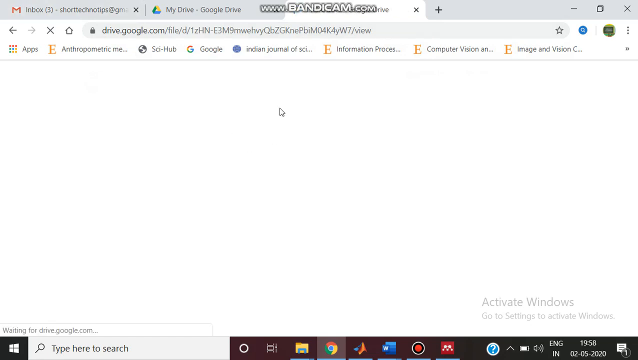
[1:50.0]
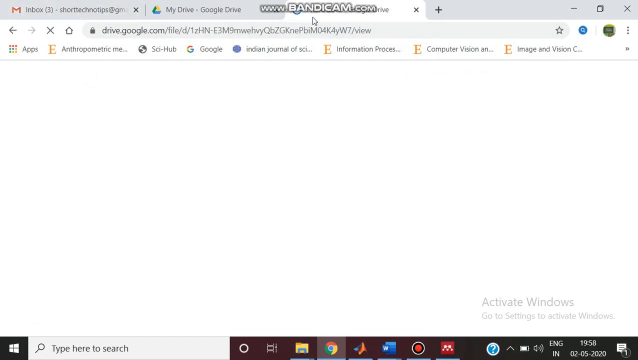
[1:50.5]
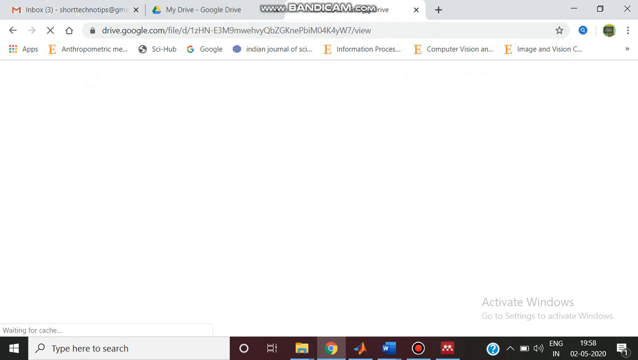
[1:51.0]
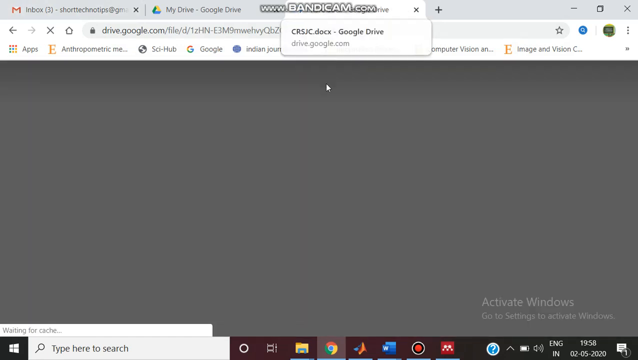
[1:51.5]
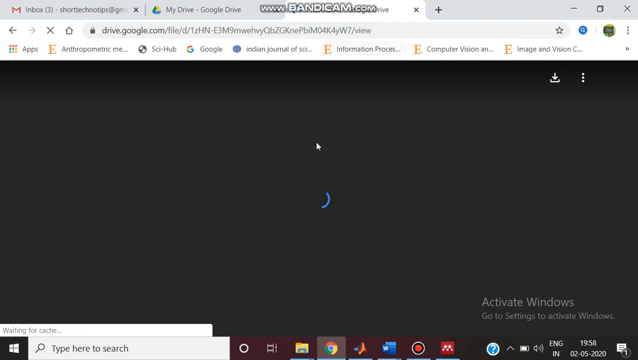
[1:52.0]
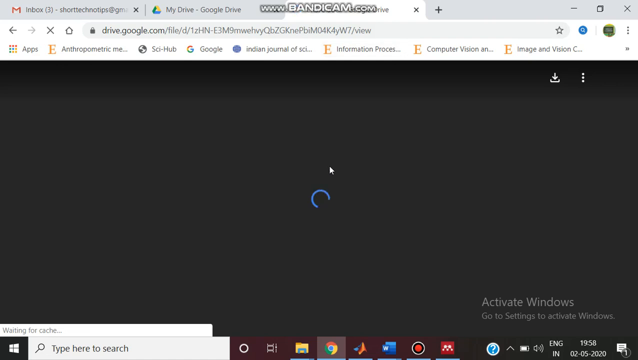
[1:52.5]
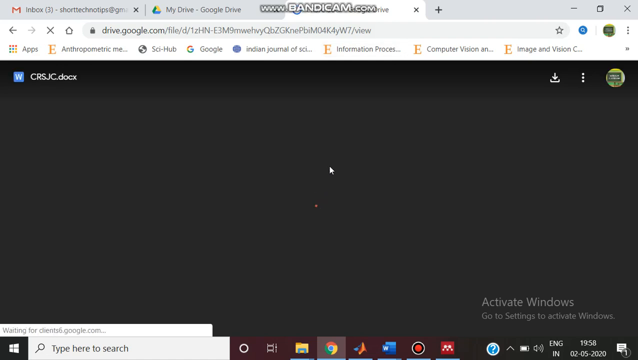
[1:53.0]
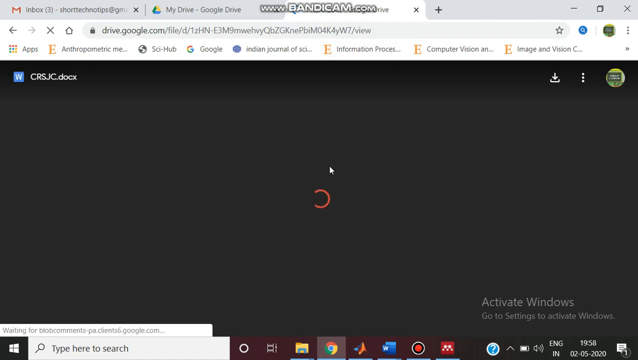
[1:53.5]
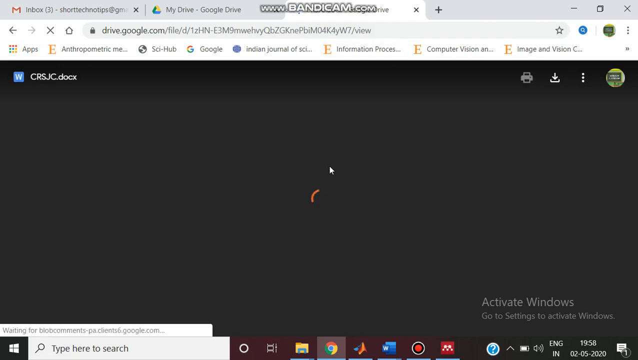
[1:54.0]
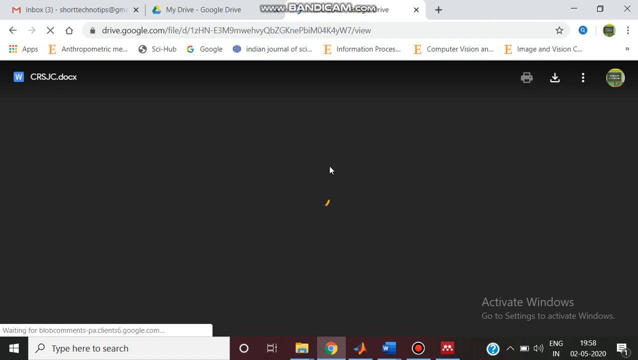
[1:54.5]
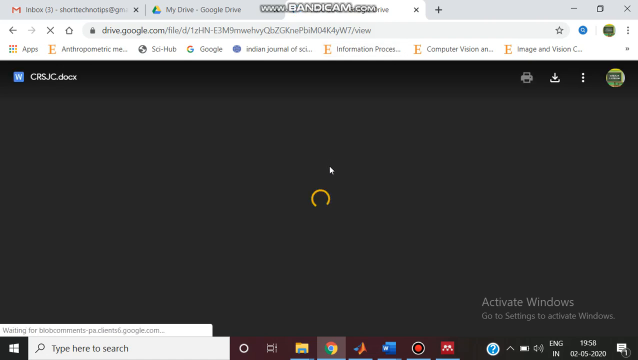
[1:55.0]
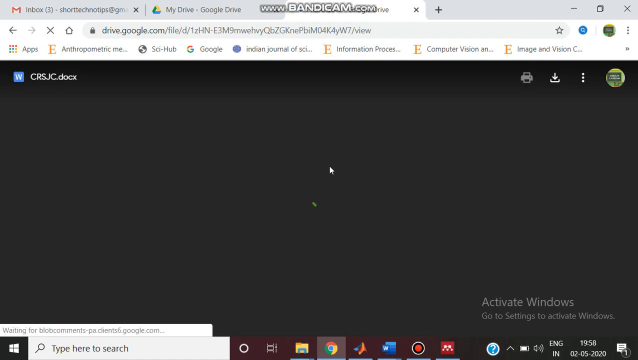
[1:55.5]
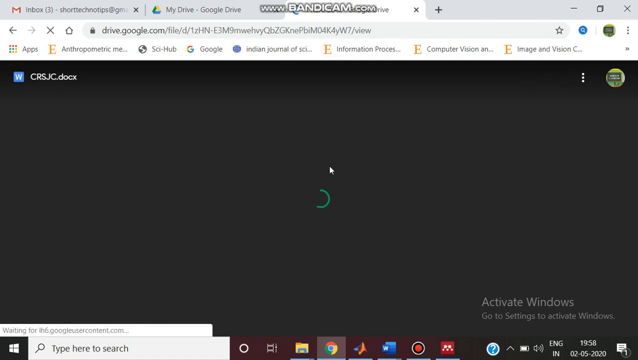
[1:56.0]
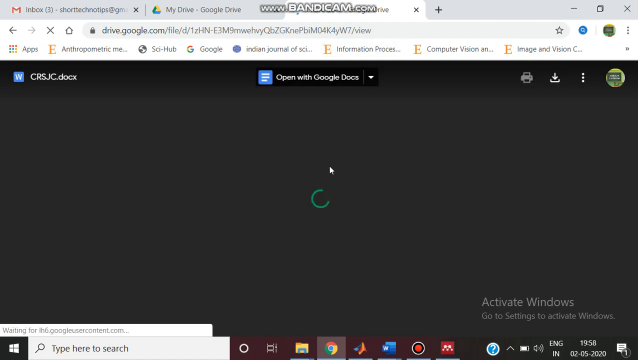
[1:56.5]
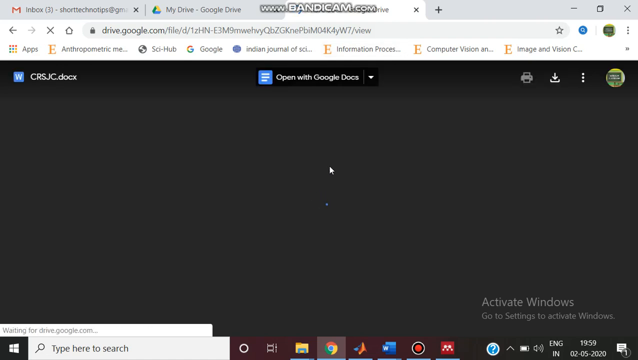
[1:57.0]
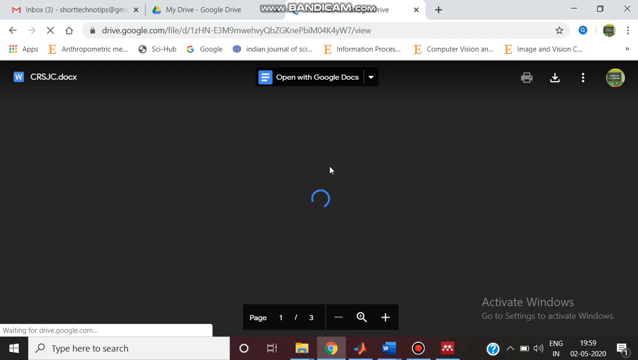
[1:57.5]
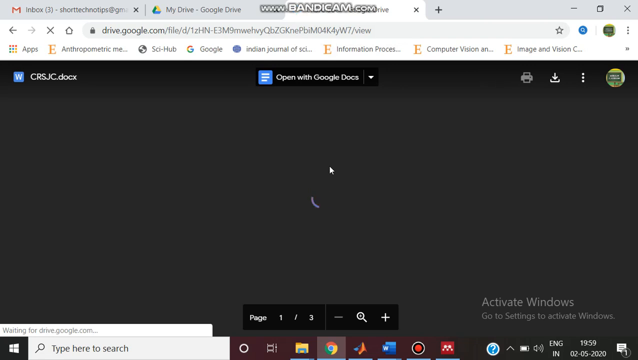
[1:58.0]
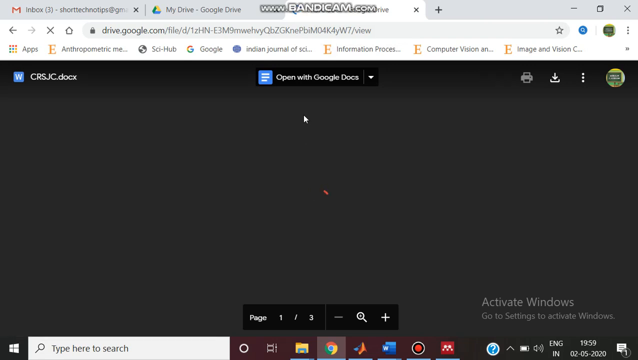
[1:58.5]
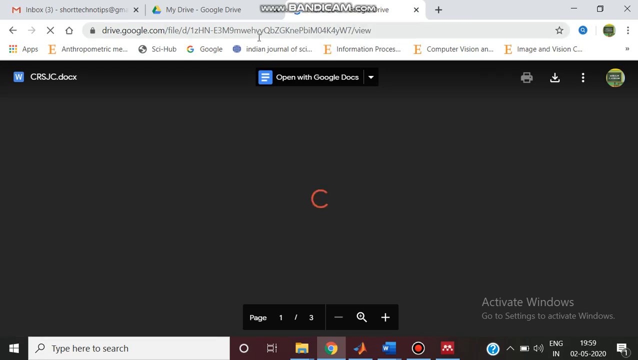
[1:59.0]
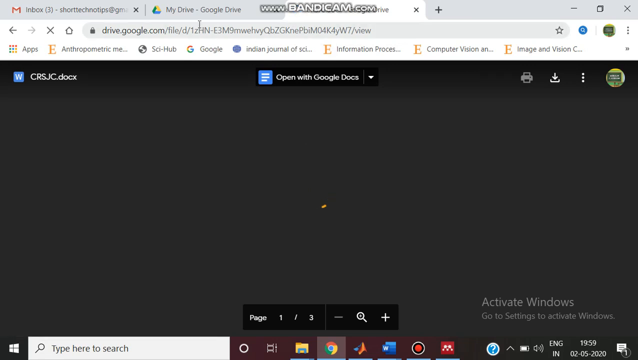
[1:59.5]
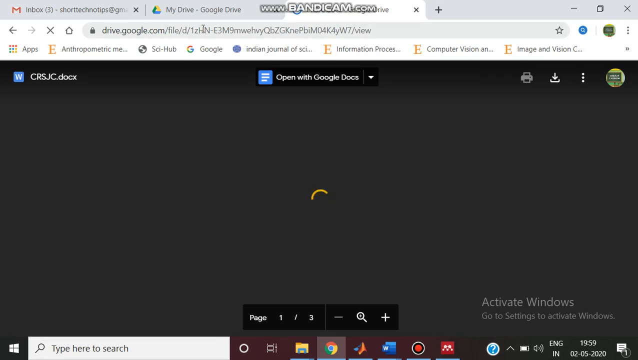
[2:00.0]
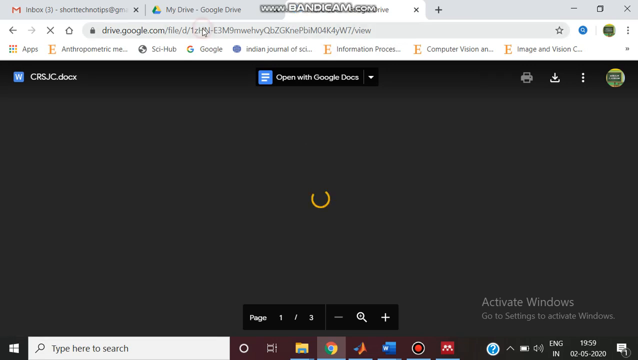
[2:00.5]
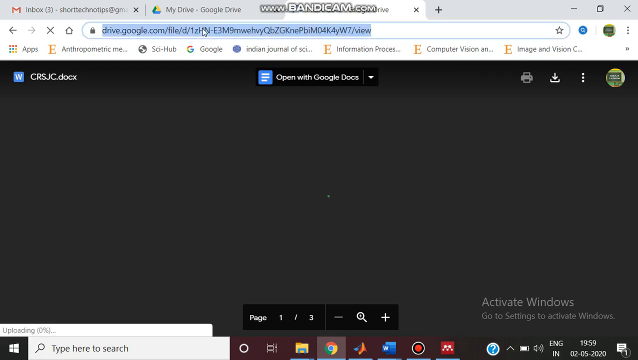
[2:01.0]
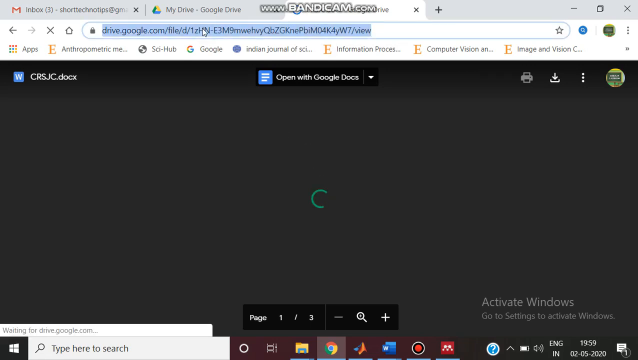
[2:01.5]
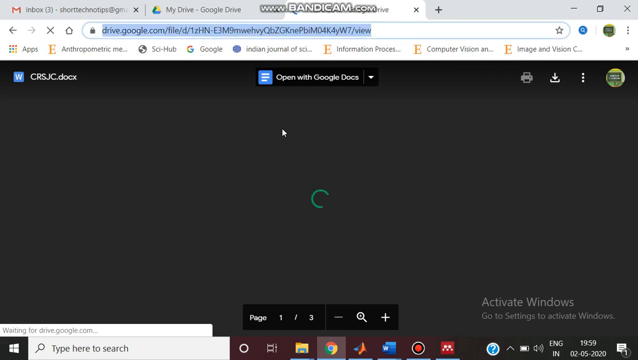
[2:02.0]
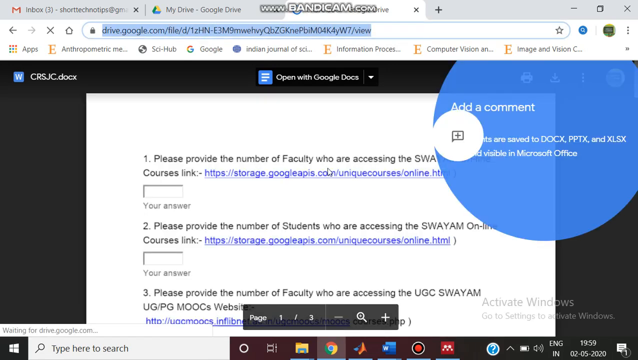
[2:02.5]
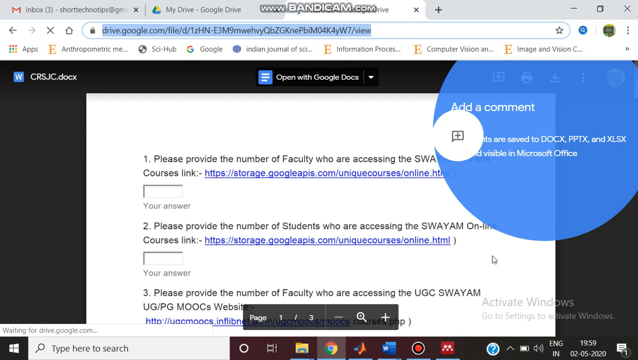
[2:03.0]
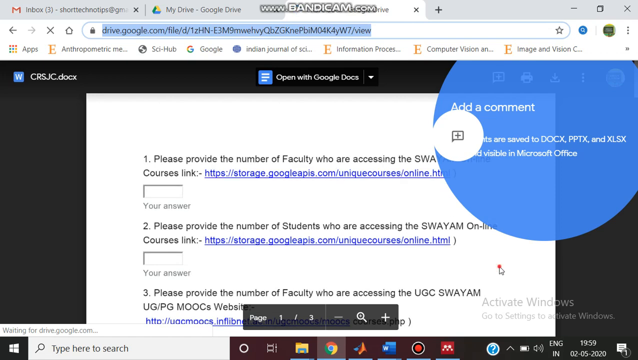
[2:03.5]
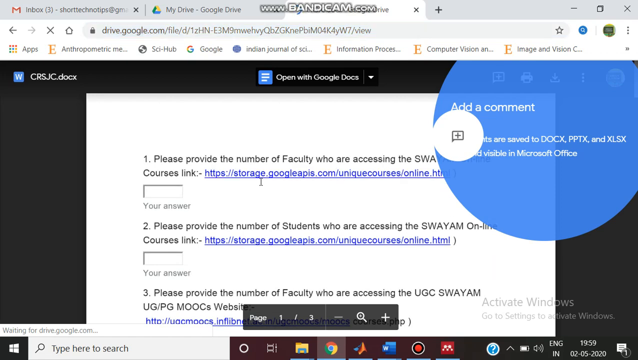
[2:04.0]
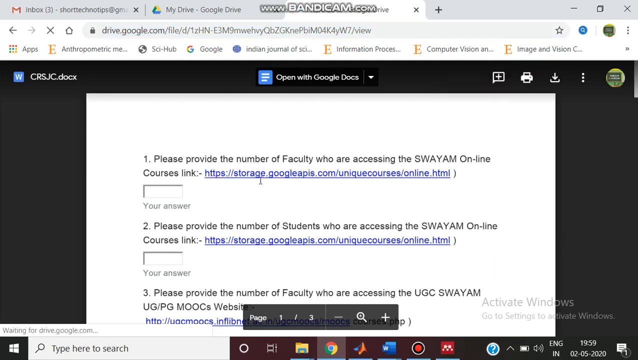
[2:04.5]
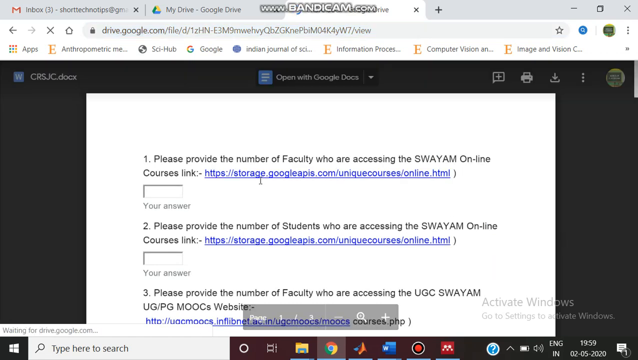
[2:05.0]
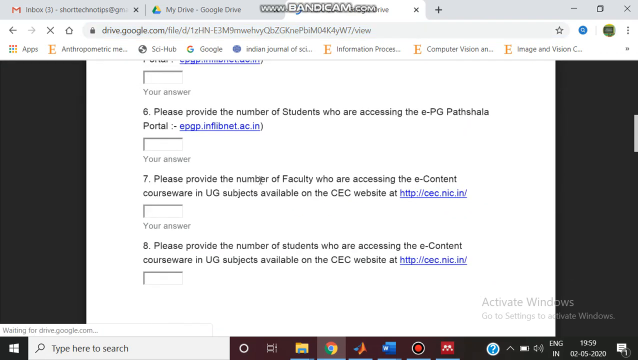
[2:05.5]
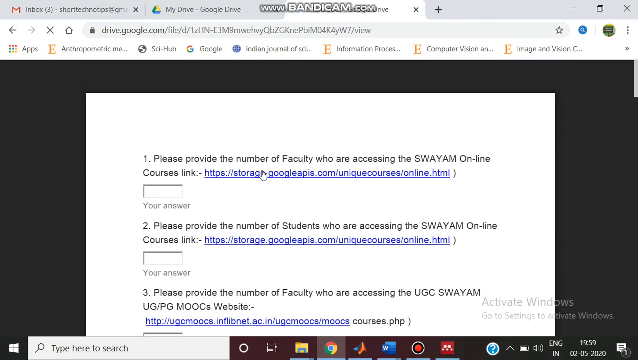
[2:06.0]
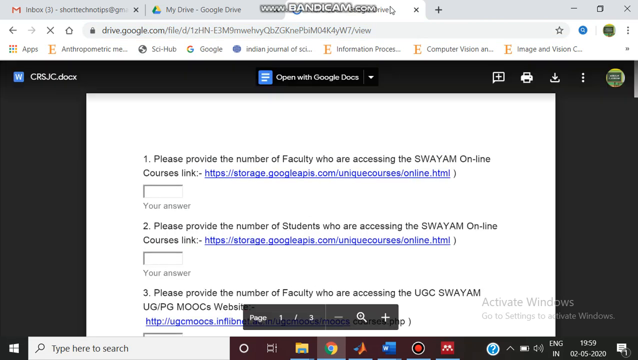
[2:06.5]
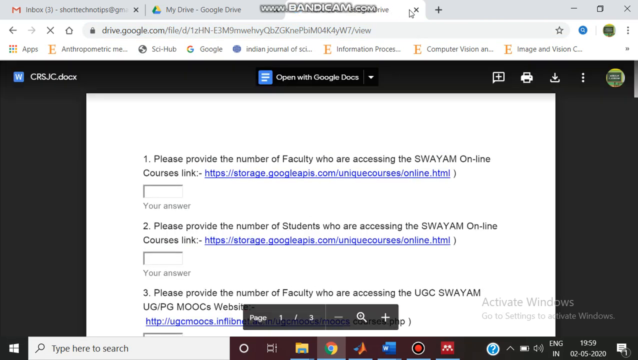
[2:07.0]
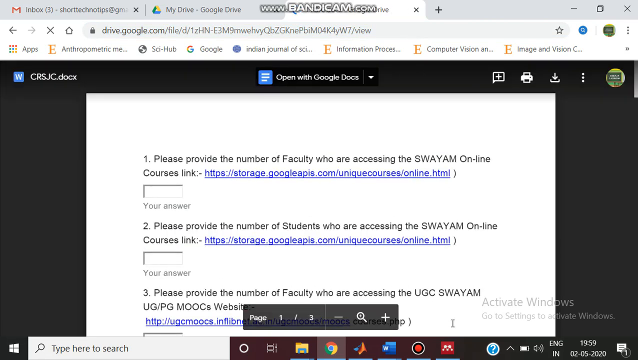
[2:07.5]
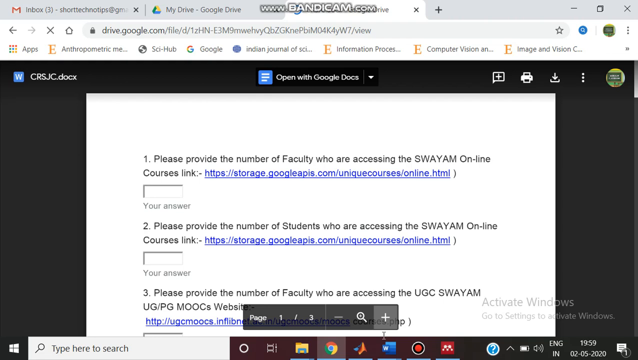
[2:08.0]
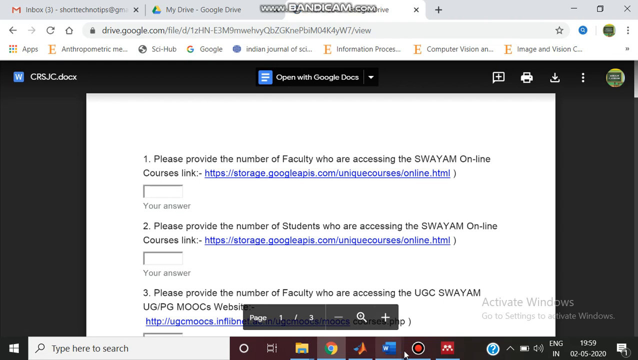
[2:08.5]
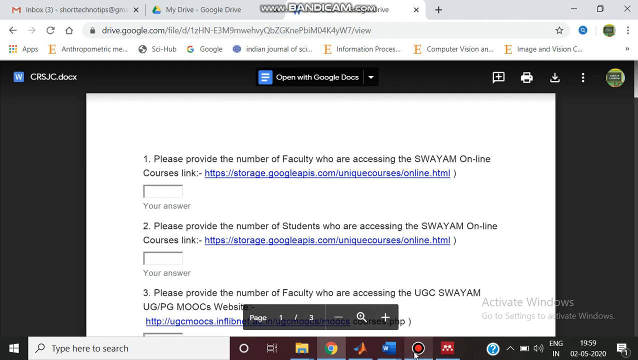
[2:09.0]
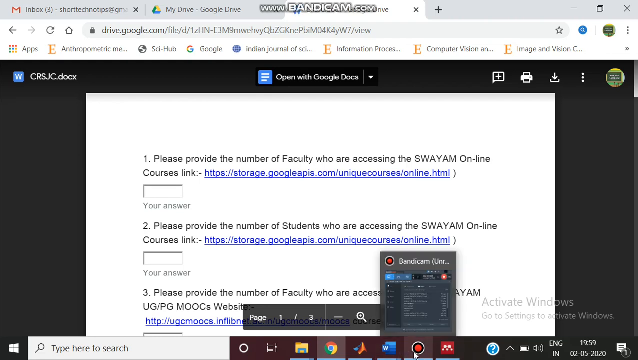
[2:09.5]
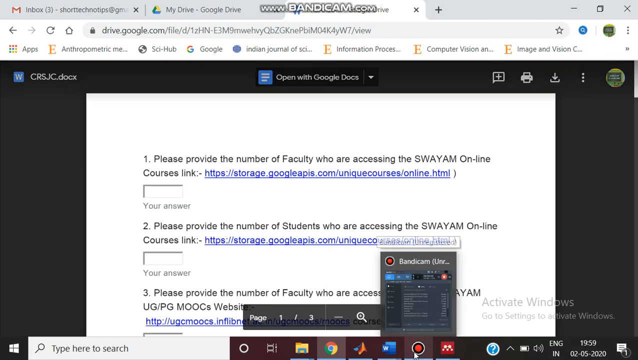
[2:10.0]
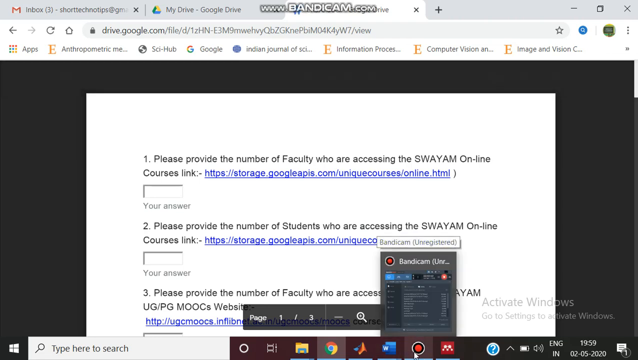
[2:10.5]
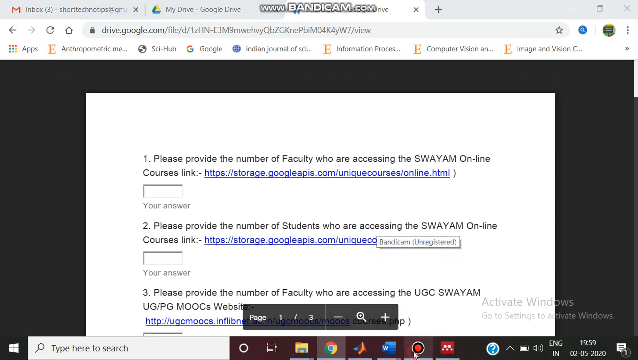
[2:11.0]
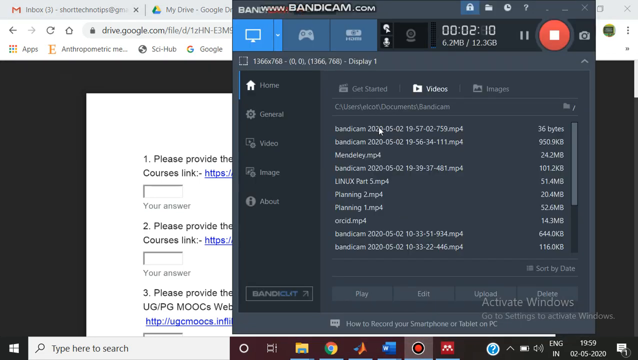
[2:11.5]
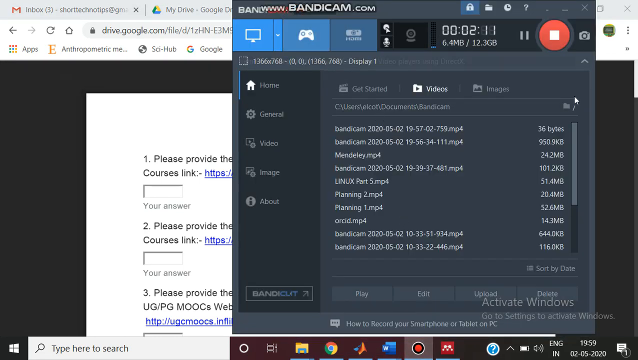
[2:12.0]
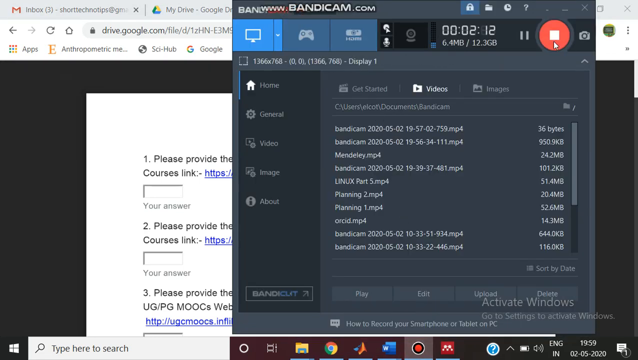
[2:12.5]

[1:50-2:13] Two tabs are open in Google Chrome, Gmail and Google Drive, and a third tab has been opened in which a Google Drive file is loading: a Windows document named crsjc.docx. A loading whirlwind in the middle turns green, then blue, red, yellow and green, and finally the page loads. The person scrolls up with the cursor, then clicks Bandicam on the toolbar at the bottom, which brings up a grayish box for www.bandicam.com with white text and several entries in its body. They click a square button inside a round circle that looks like the stop button on a recording device. The icon is white, black inside, with a red center.